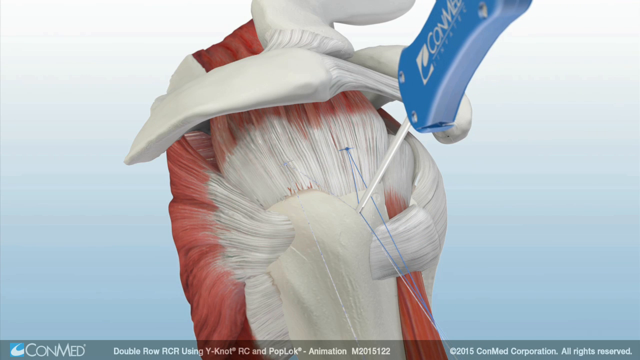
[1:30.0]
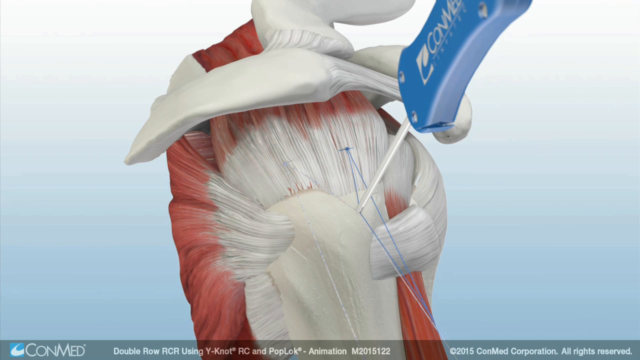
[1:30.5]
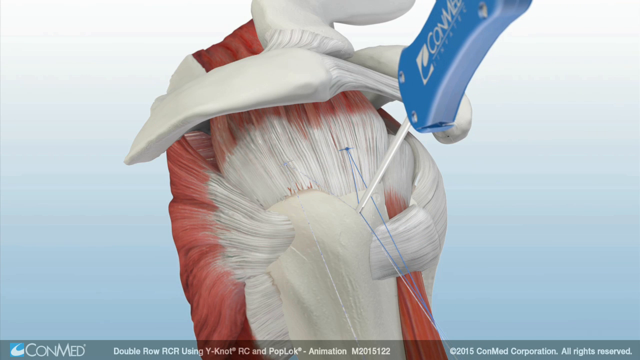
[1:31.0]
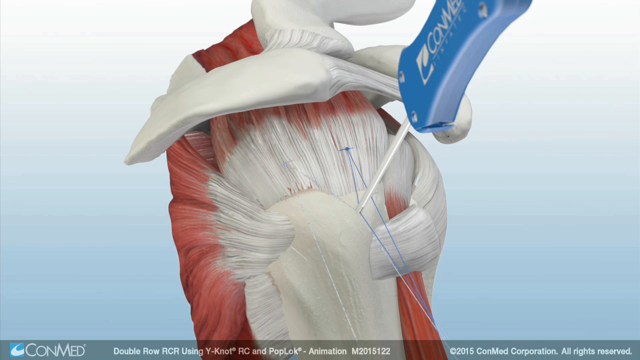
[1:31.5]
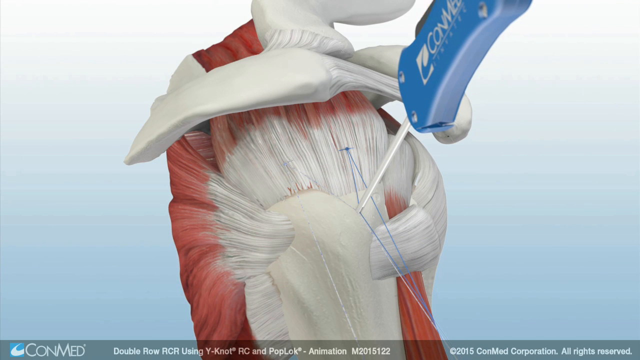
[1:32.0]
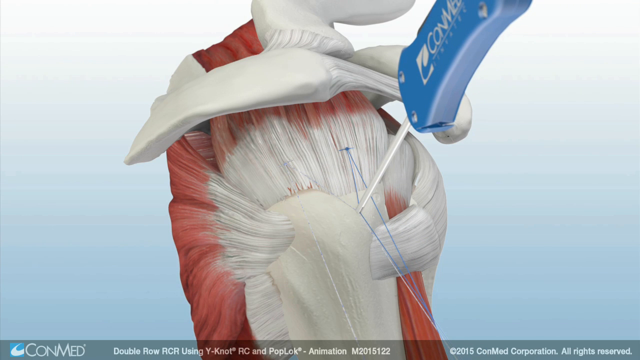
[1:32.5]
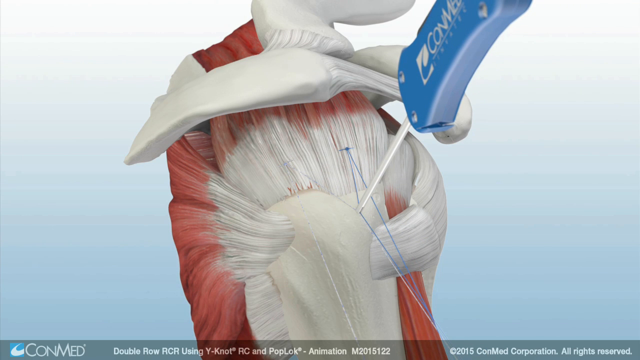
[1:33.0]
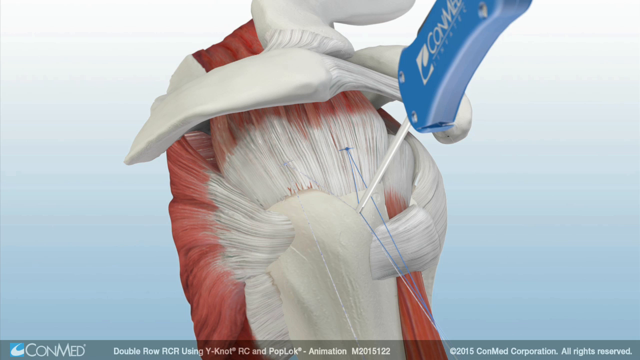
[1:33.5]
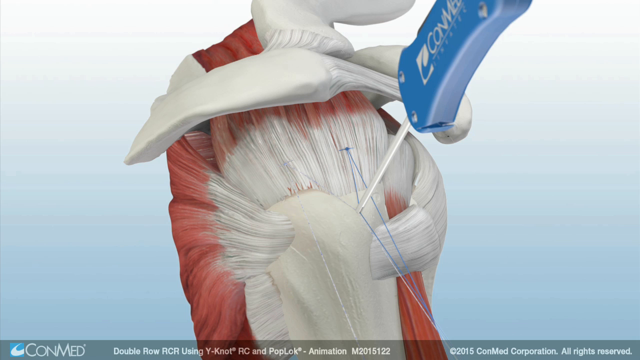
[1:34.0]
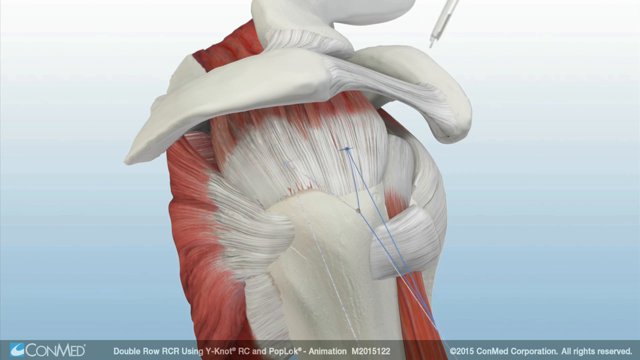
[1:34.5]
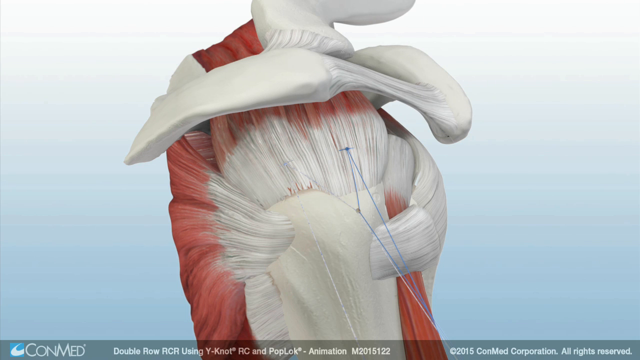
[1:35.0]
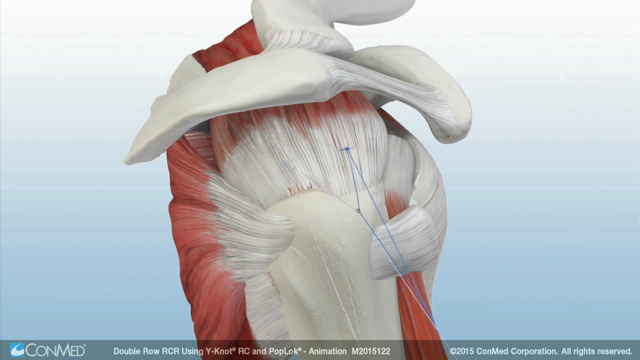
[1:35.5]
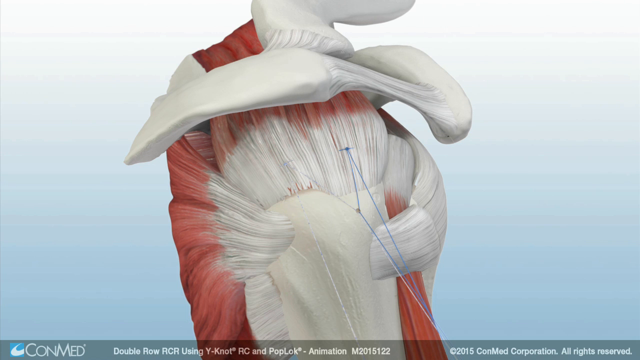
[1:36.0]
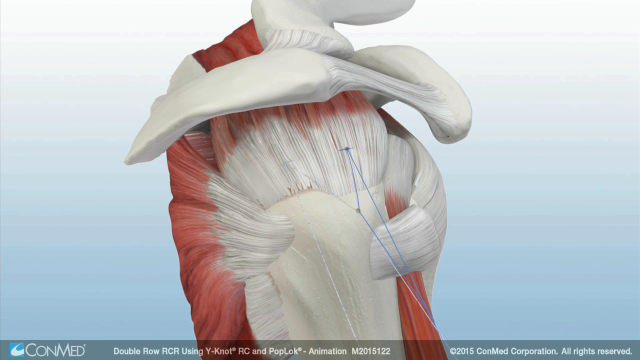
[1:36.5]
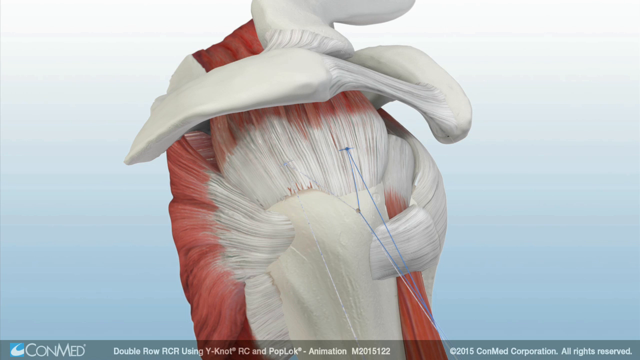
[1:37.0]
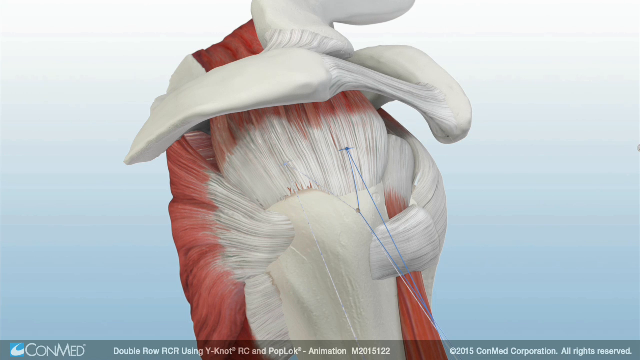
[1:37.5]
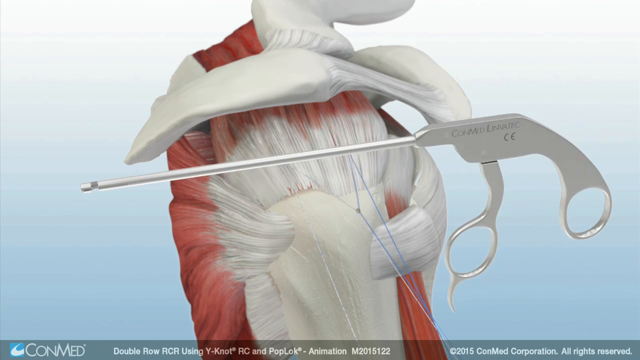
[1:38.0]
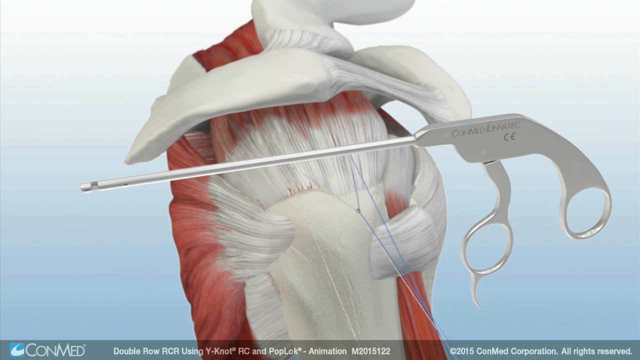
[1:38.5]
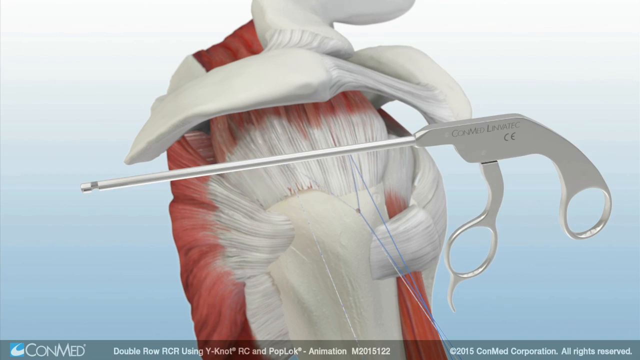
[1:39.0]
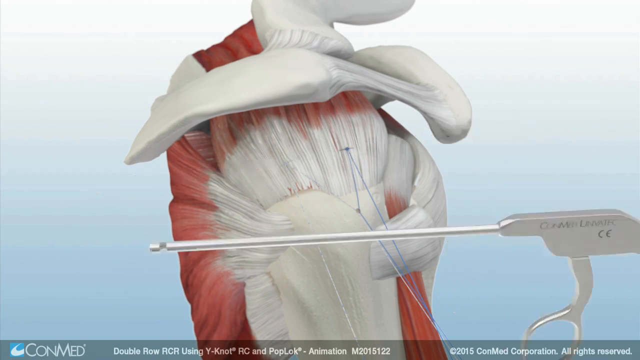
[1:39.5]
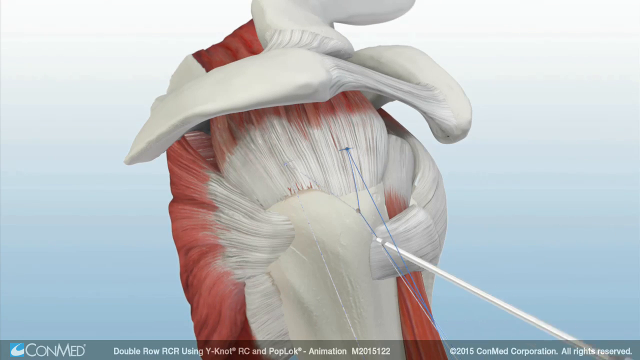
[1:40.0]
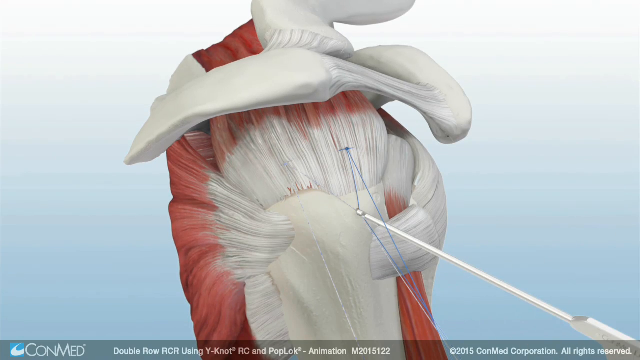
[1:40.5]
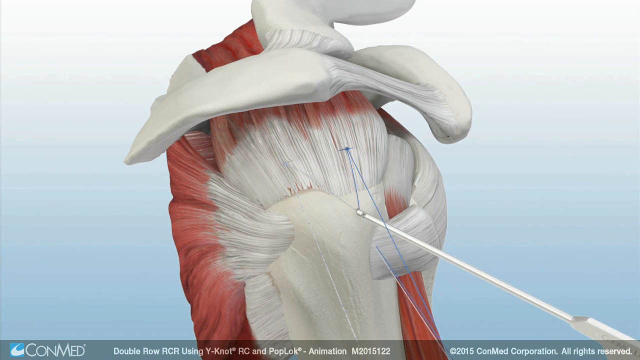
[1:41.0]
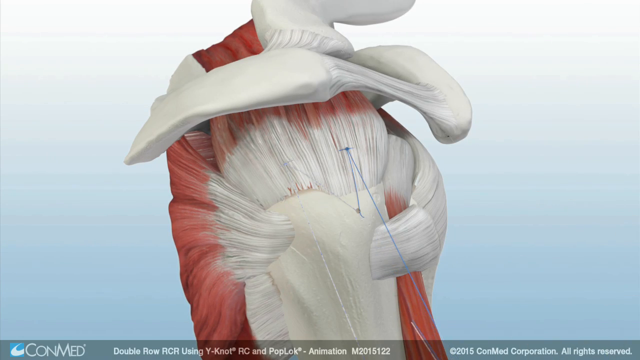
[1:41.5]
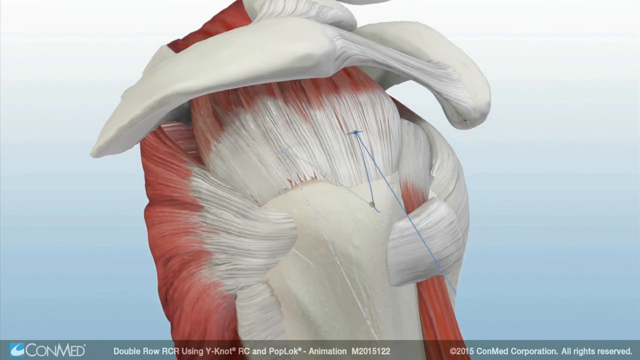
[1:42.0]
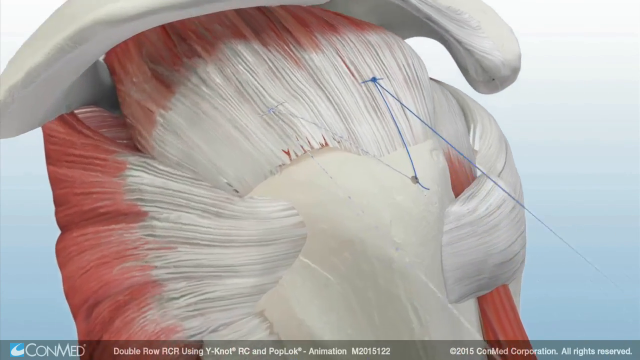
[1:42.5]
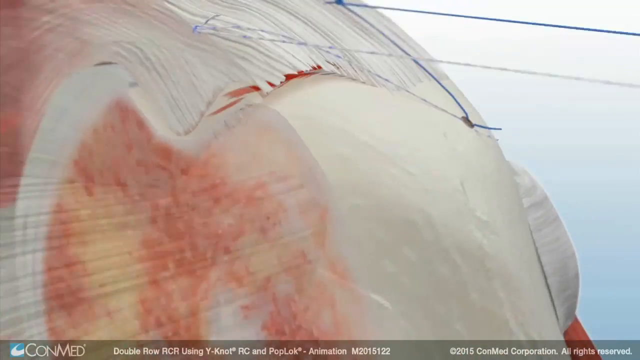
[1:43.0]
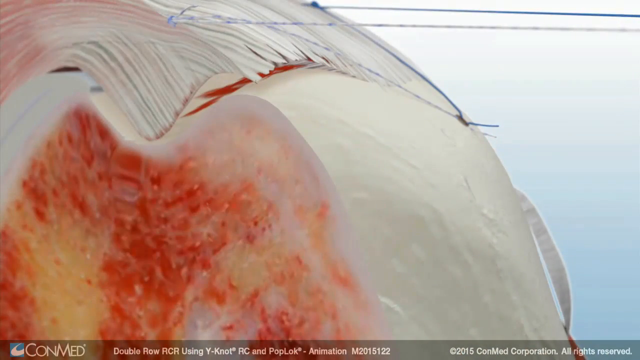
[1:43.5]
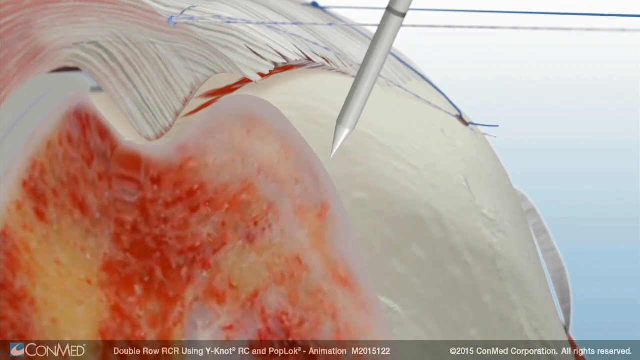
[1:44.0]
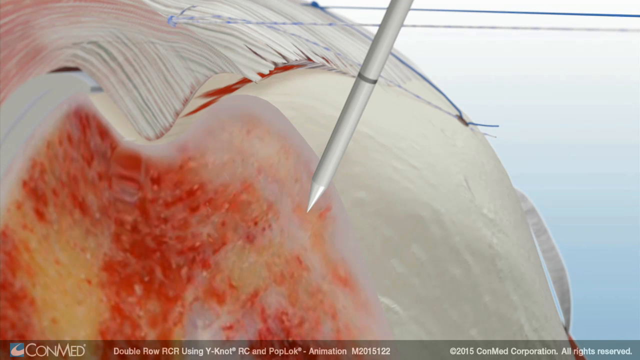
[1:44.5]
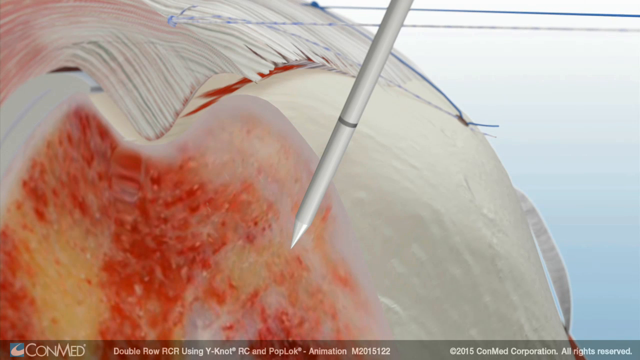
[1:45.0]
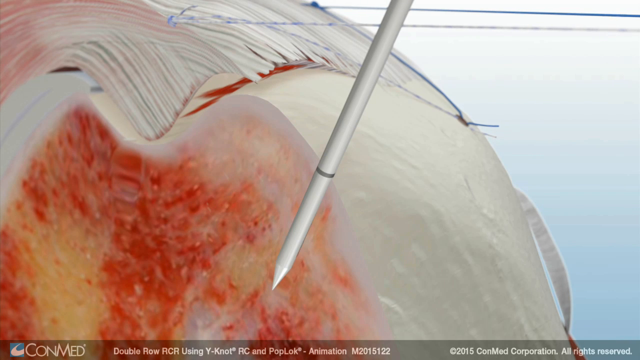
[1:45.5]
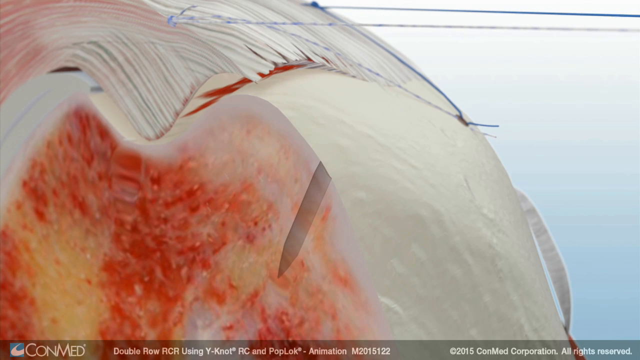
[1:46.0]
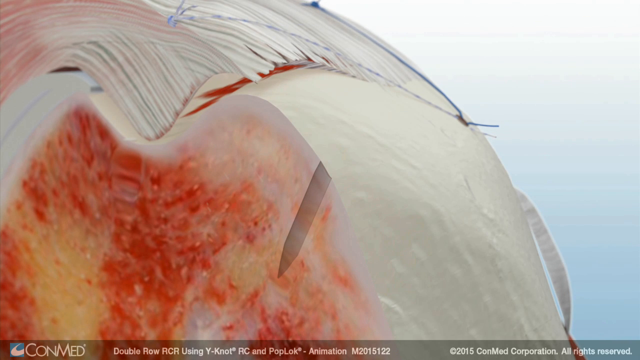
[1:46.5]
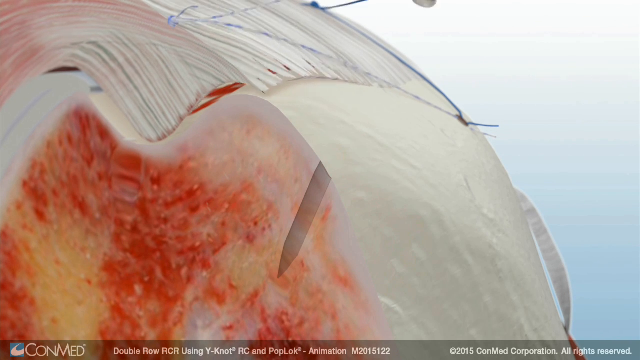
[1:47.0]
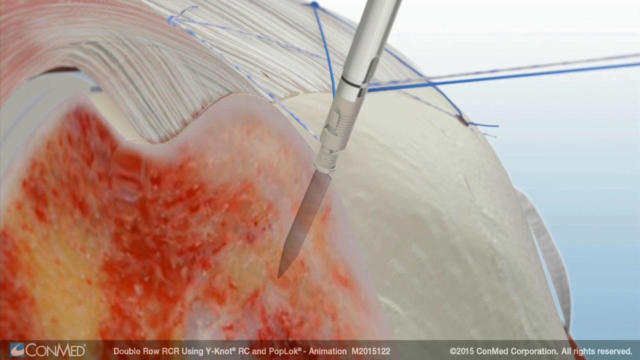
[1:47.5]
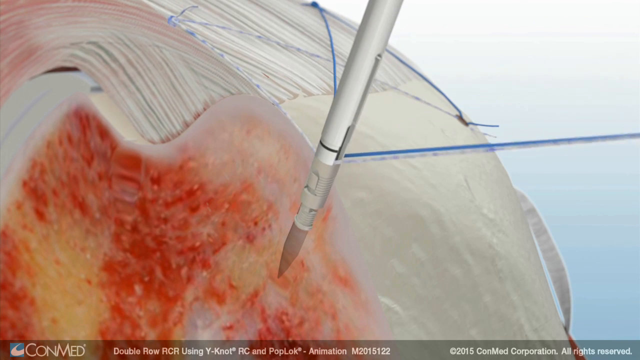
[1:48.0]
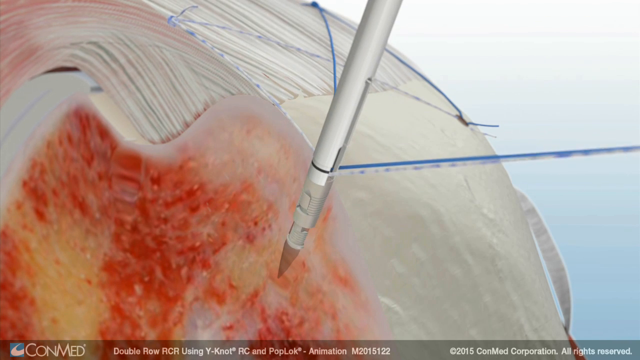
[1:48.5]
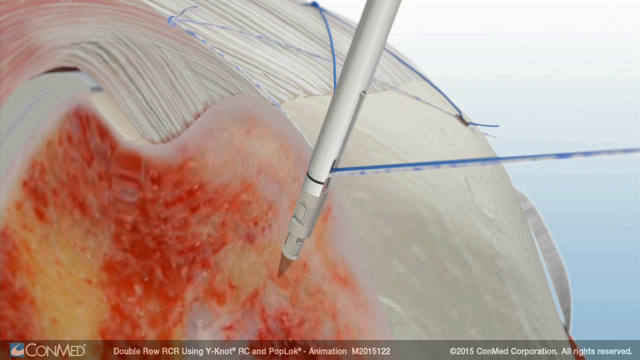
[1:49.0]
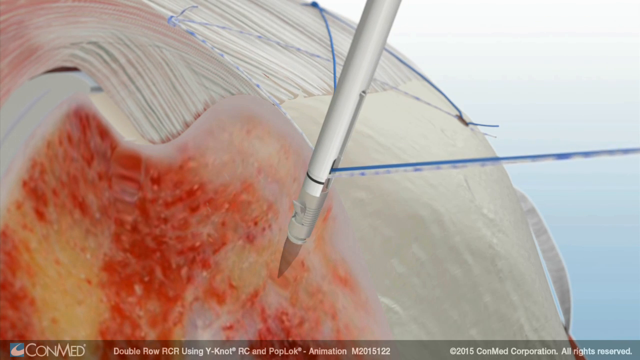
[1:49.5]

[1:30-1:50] An animated illustration shows a surgical procedure on a human shoulder ball socket, with the muscles, tendons and bones exposed against a pale blue background. An instrument with a blue handle and a long pointed metal rod-like extension bores a hole into the upper arm, very close to the tendons. As the instrument is pulled out, surgical threads are seen that have been pushed into the hole to hold the tendon attached to the upper arm bone. A different surgical instrument then nicks off the thread. Another hole is drilled into the upper arm shoulder bone, and the instrument pushes the surgical thread, or suture, deep into the bone. The boring instrument's blue handle has white text on it, the brand name of the tool's manufacturer.